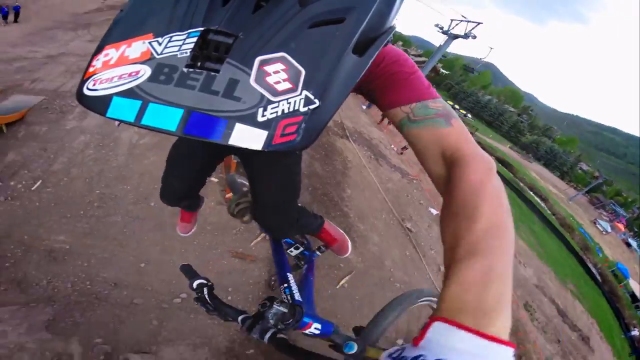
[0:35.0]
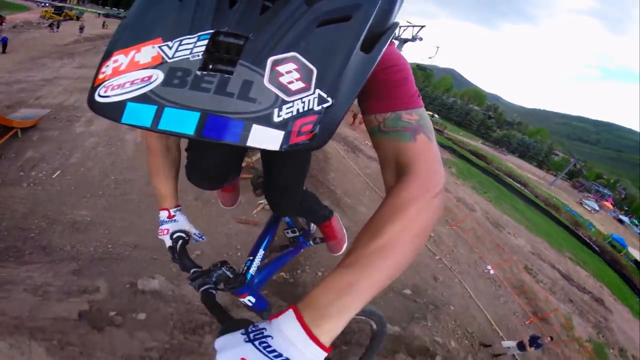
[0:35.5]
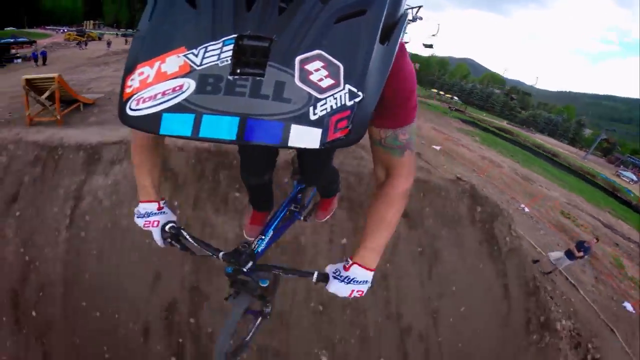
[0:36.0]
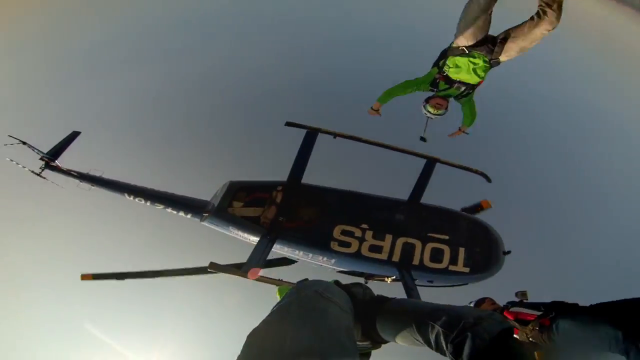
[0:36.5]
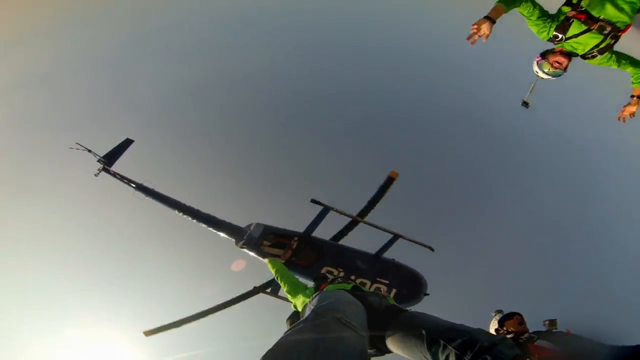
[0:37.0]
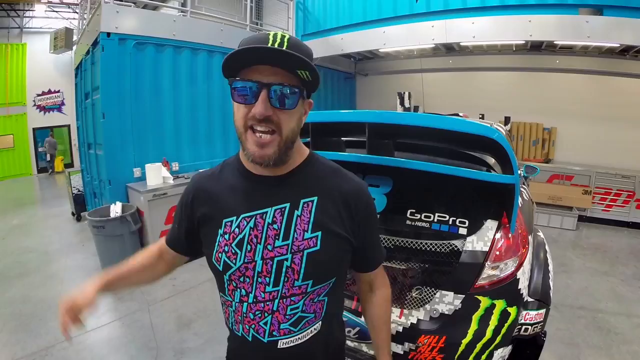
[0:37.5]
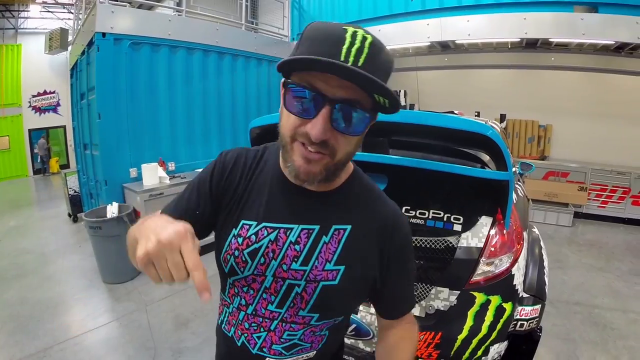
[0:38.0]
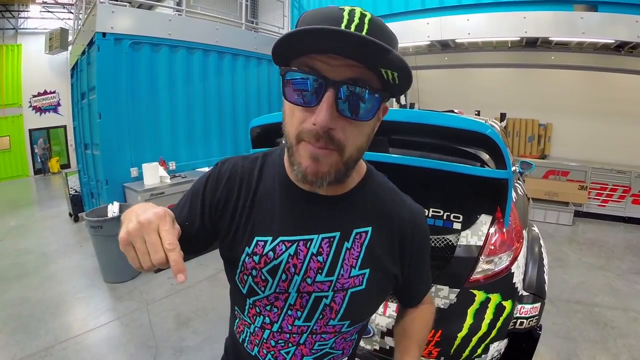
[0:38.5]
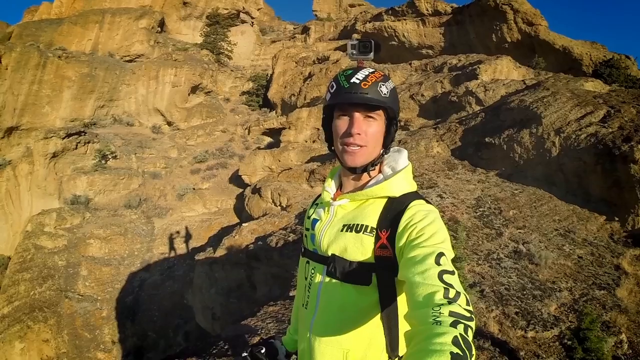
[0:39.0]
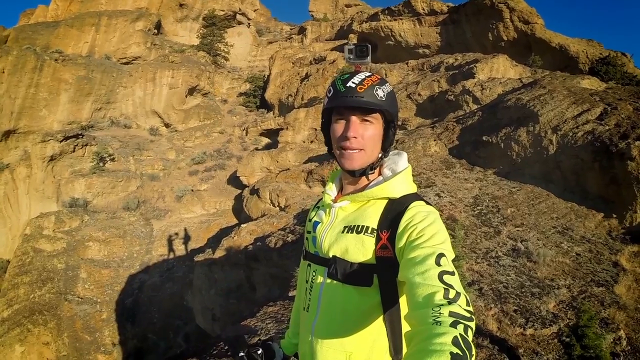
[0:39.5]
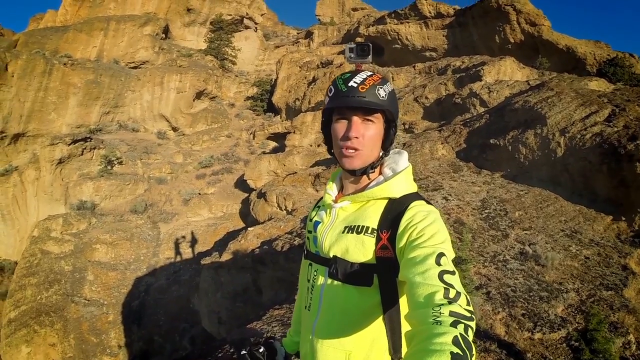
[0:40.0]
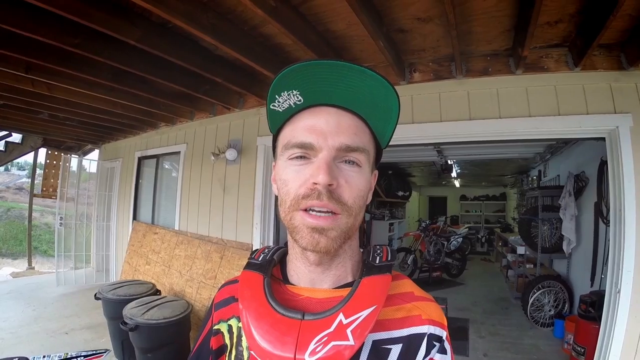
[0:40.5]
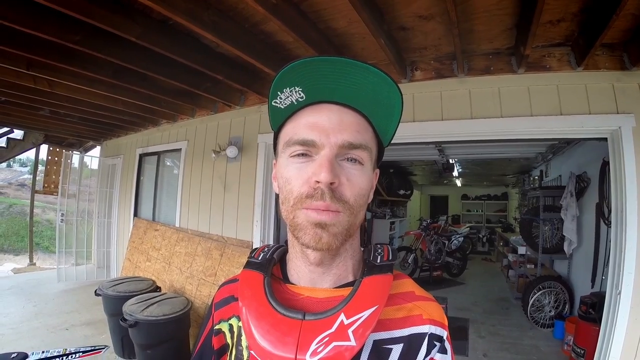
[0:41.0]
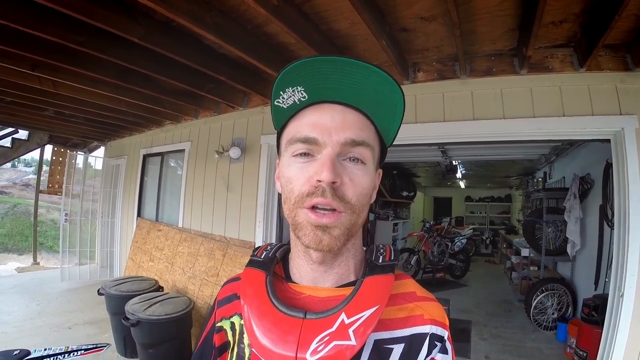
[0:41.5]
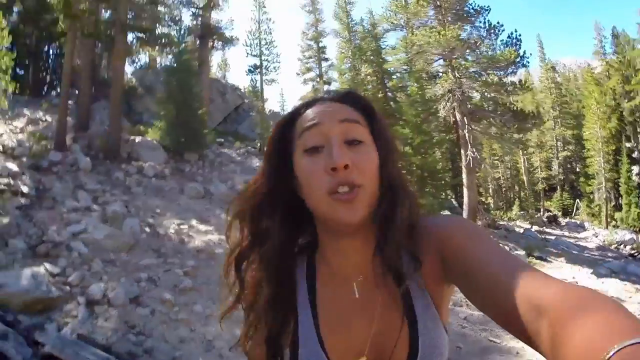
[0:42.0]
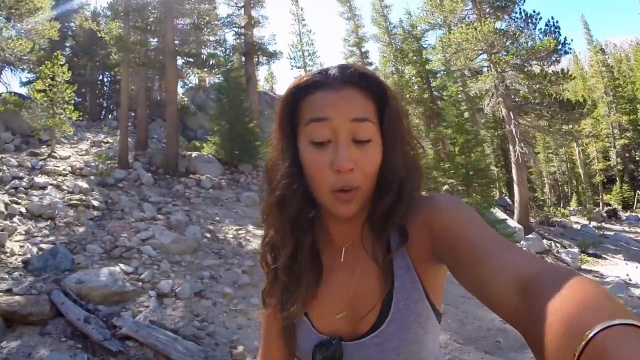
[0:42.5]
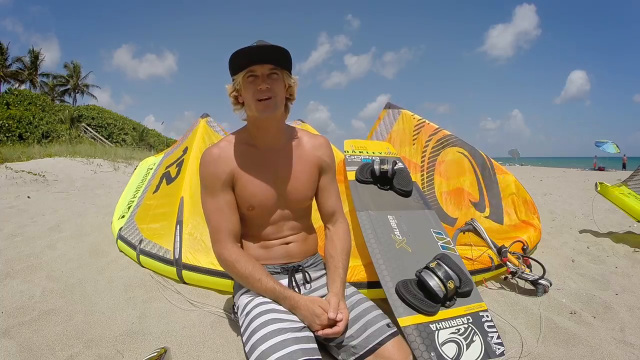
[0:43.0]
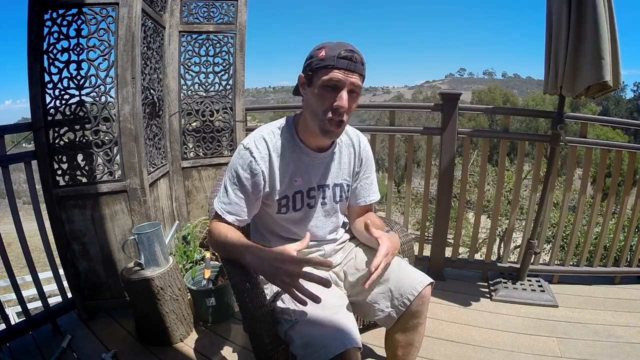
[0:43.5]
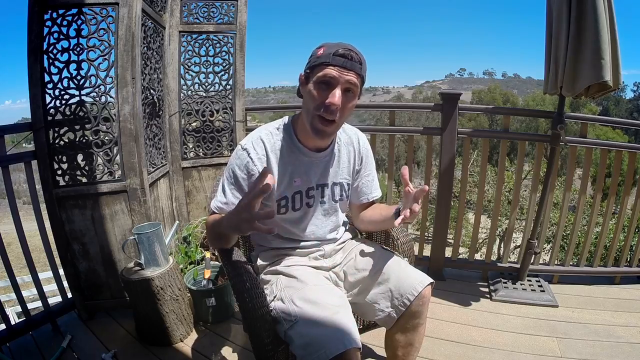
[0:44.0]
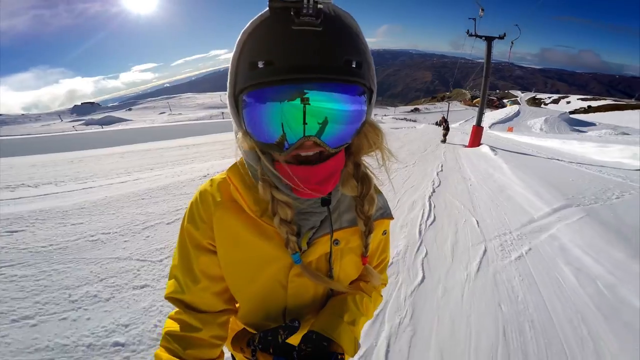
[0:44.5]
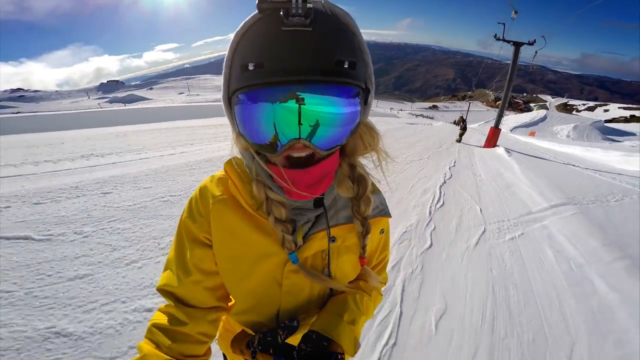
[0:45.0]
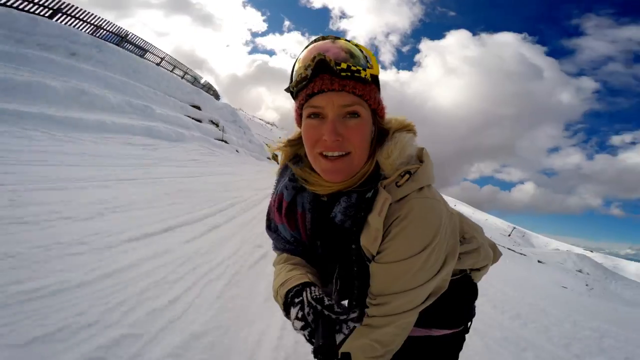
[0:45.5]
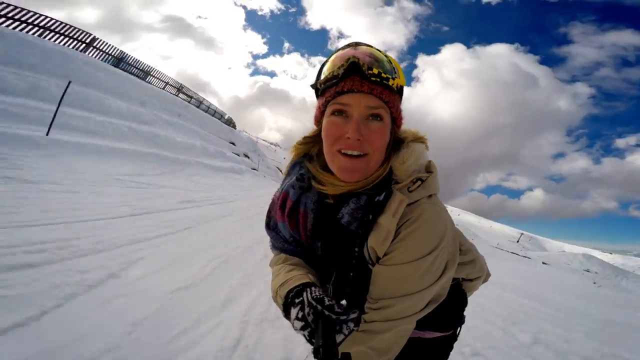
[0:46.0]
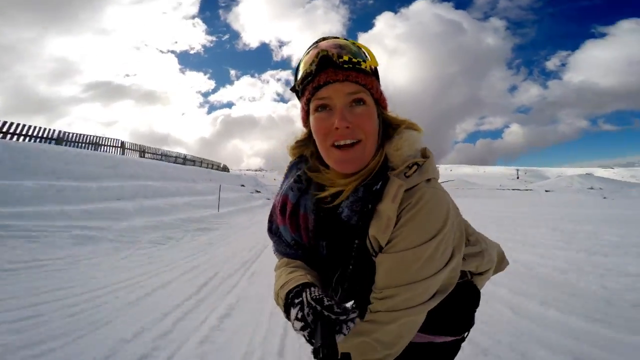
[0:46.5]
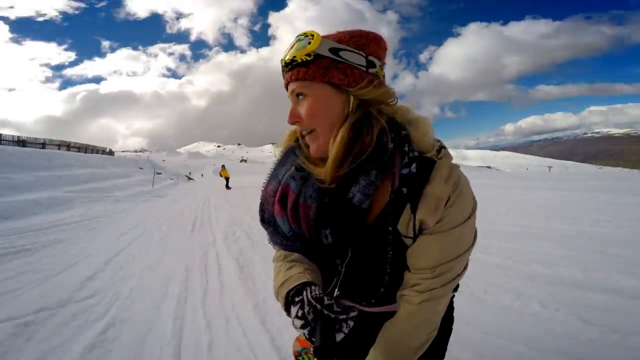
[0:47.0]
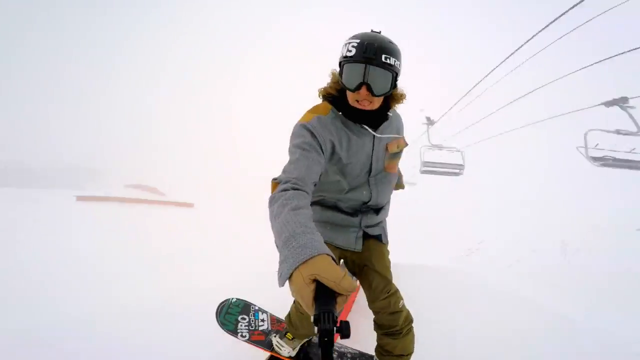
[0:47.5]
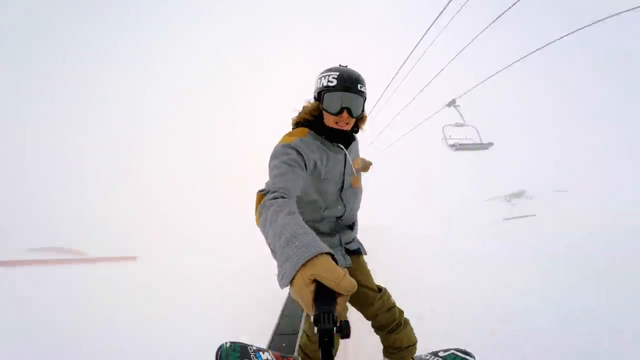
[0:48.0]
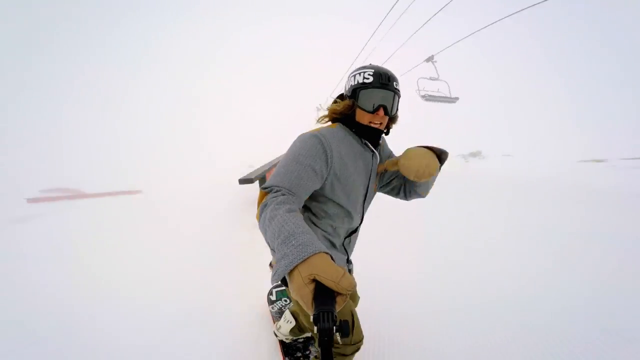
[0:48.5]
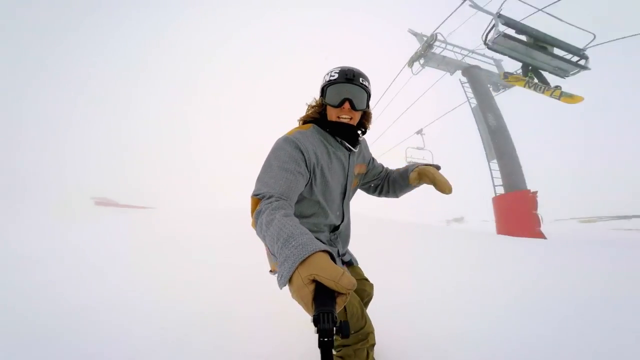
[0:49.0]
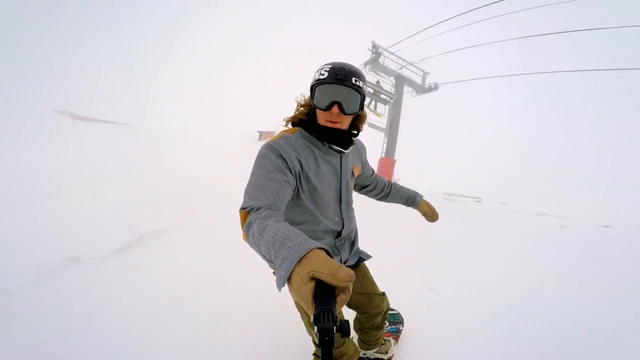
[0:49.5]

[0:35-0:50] The view is the POV of the dirt bike rider. His gloves say "20" and "13", one on each hand. He has a bunch of stickers on his GoPro helmet and a tattoo on his left bicep. Apparently skydiving follows: a POV shot looking back up, like a reverse bird's-eye view, of being dropped from a helicopter. The guy in the neon green jacket is dropped and they are falling. The camera pans back to the race car guy, who wears a Monster hat and a shirt that says "kill all fires." The people take turns talking, including the people snowboarding with a selfie stick, and the shots keep switching between the different people.